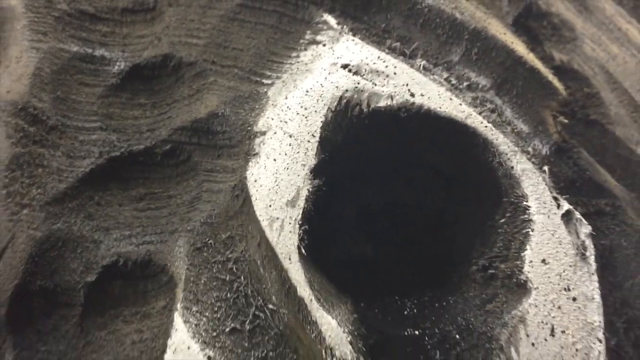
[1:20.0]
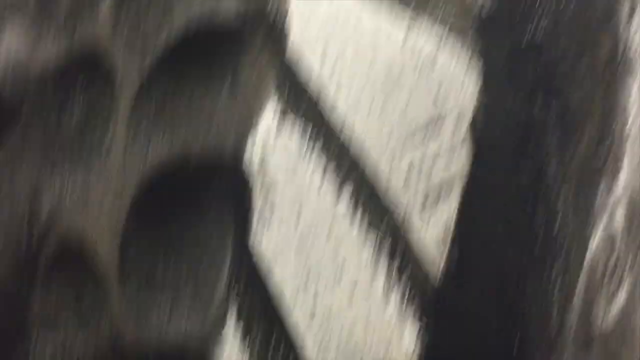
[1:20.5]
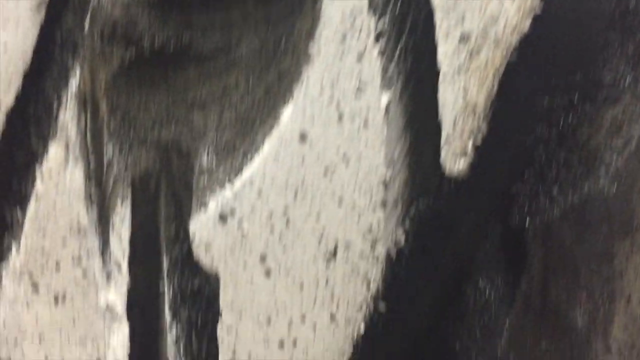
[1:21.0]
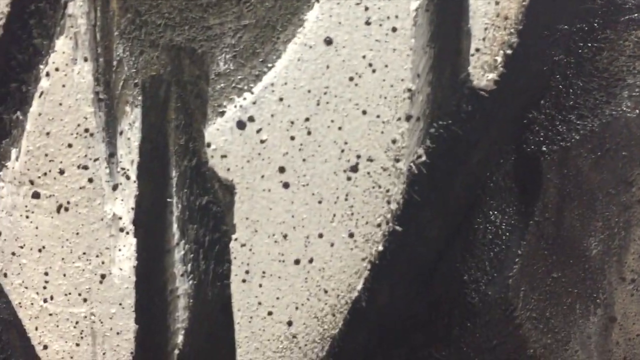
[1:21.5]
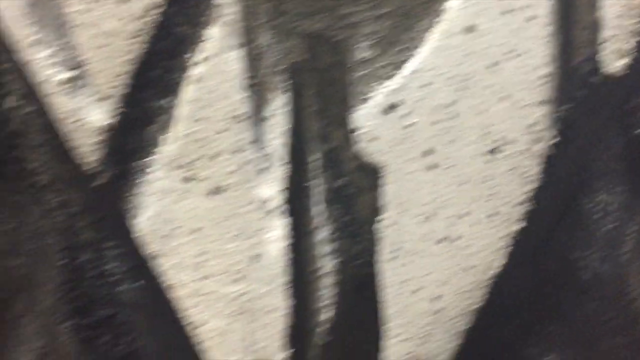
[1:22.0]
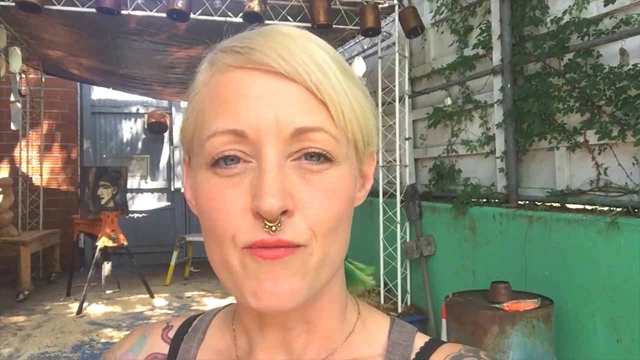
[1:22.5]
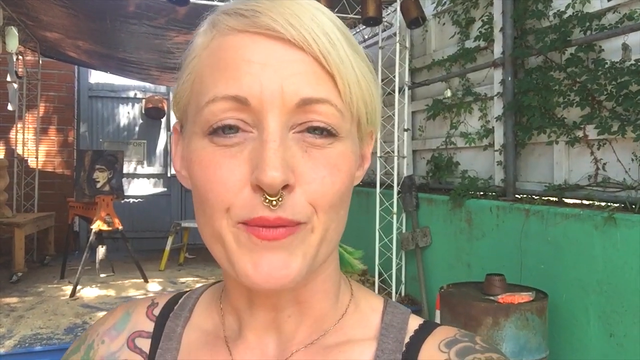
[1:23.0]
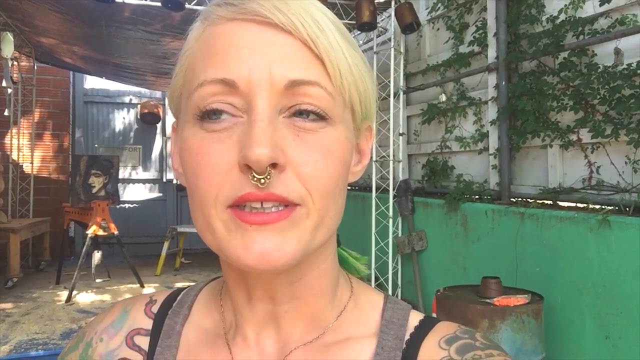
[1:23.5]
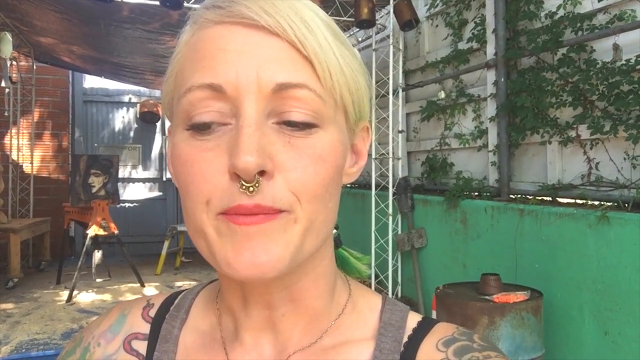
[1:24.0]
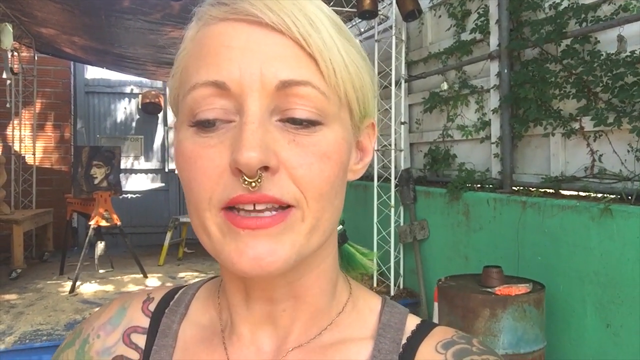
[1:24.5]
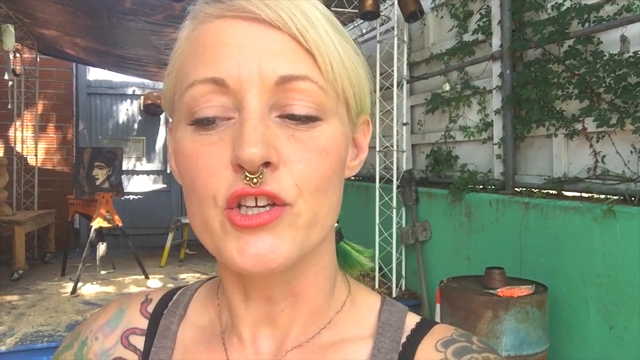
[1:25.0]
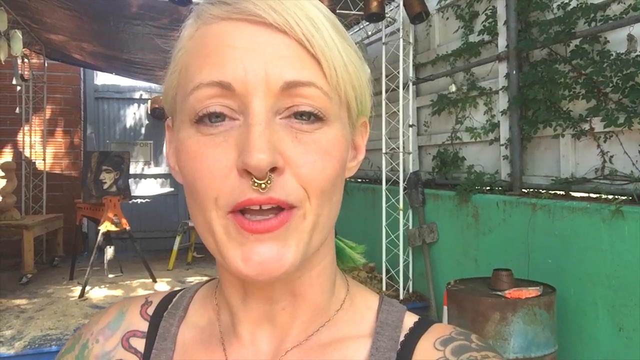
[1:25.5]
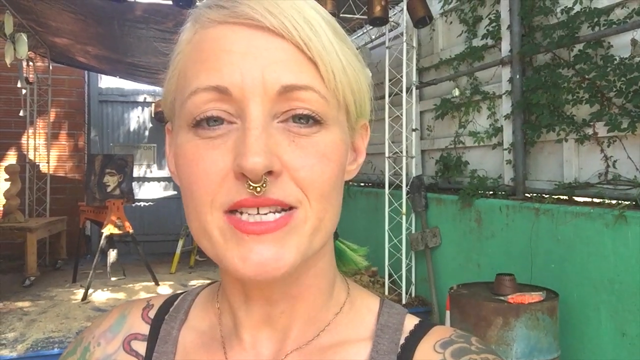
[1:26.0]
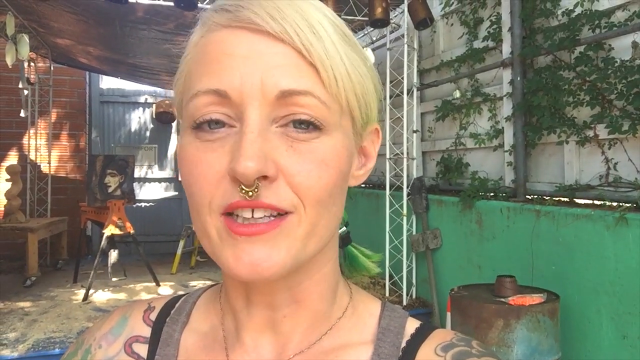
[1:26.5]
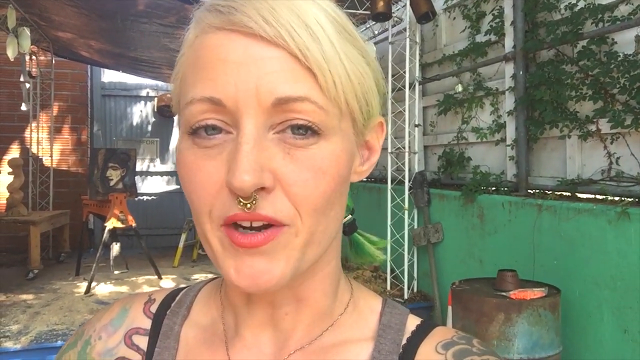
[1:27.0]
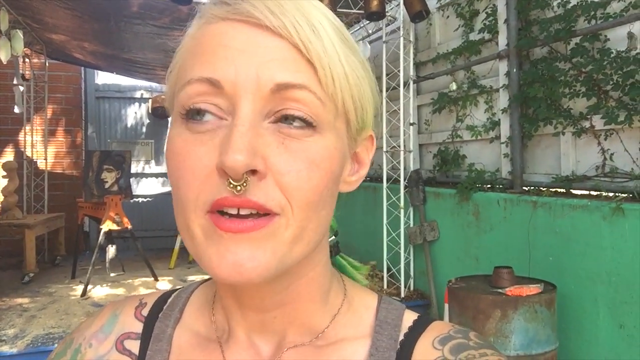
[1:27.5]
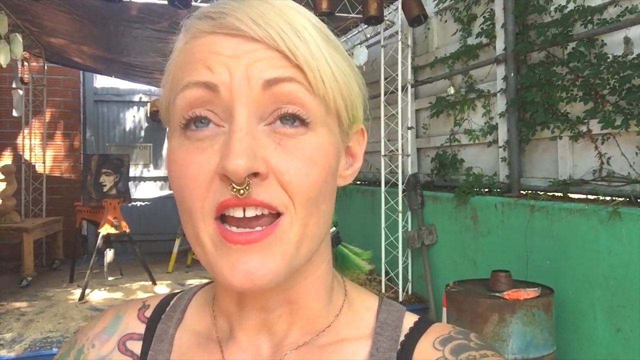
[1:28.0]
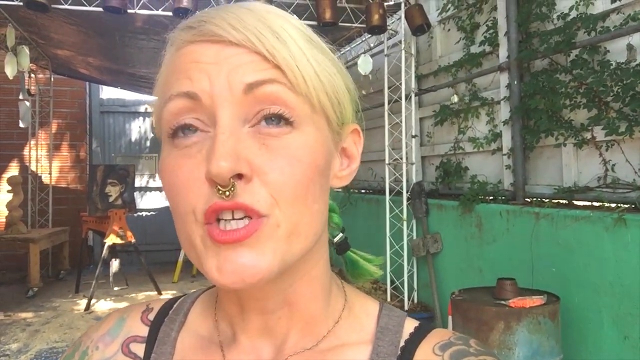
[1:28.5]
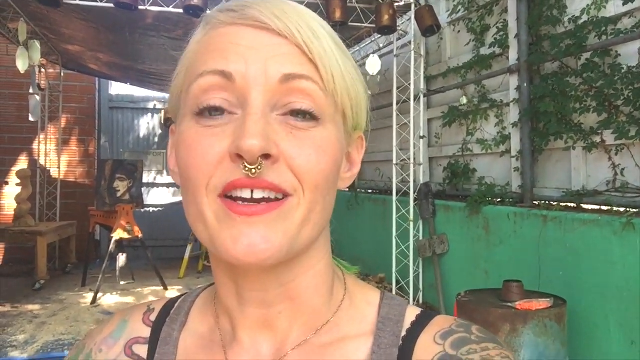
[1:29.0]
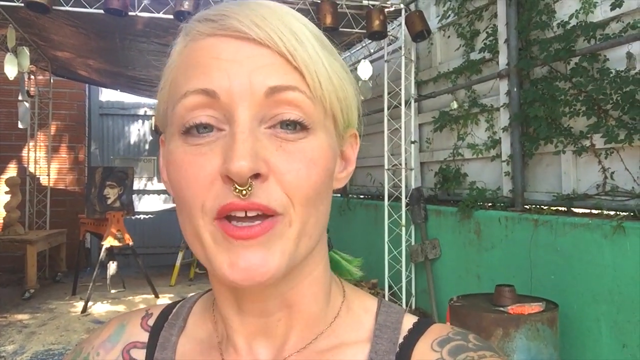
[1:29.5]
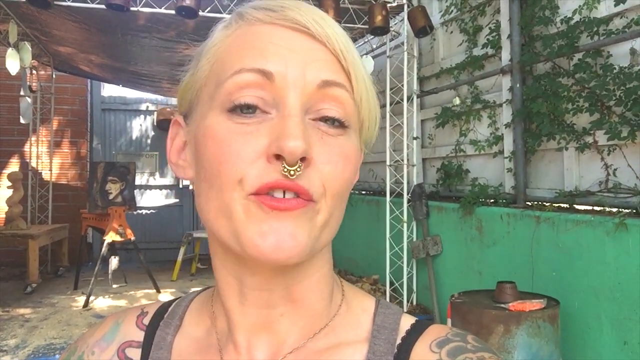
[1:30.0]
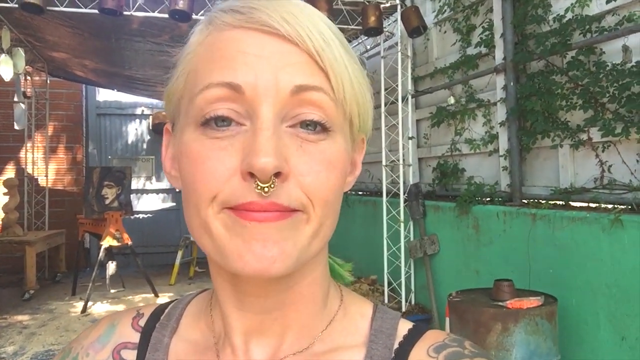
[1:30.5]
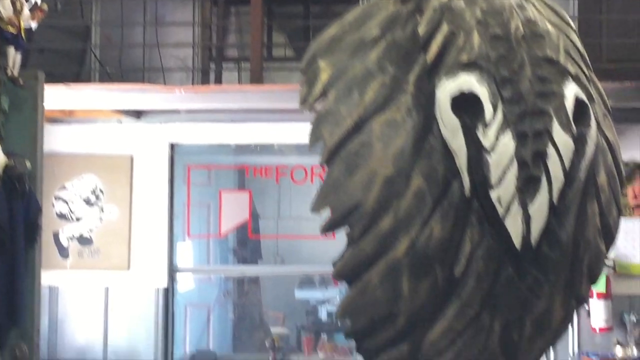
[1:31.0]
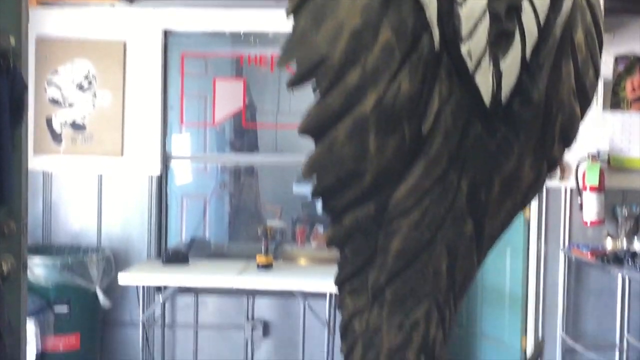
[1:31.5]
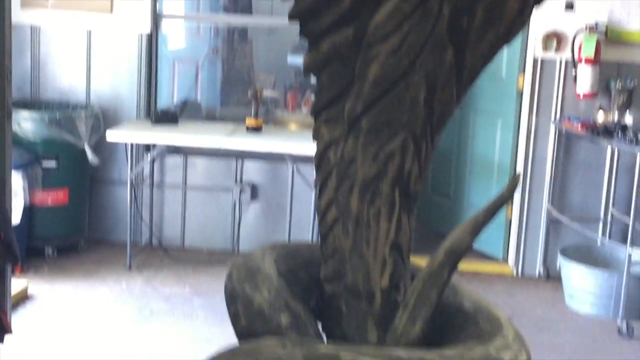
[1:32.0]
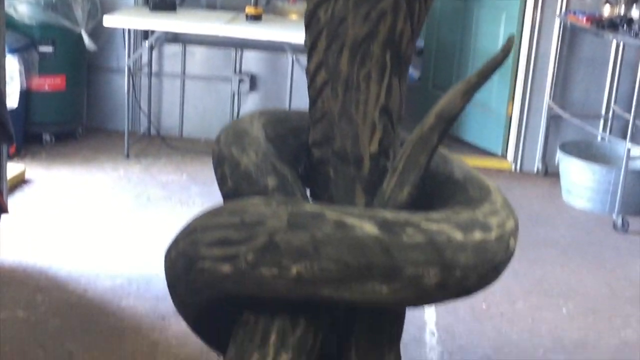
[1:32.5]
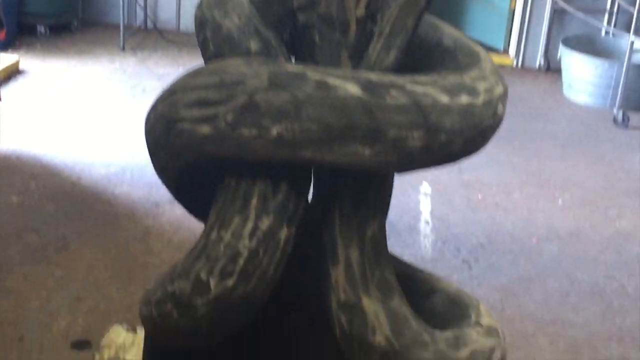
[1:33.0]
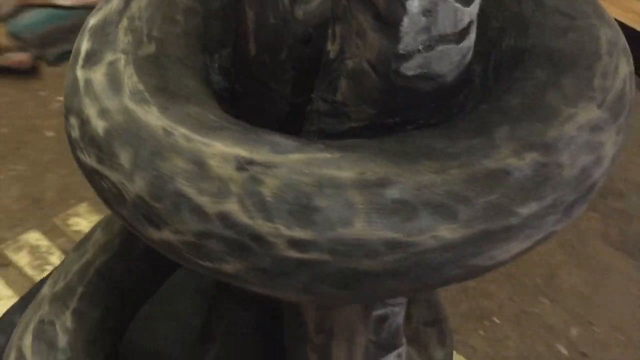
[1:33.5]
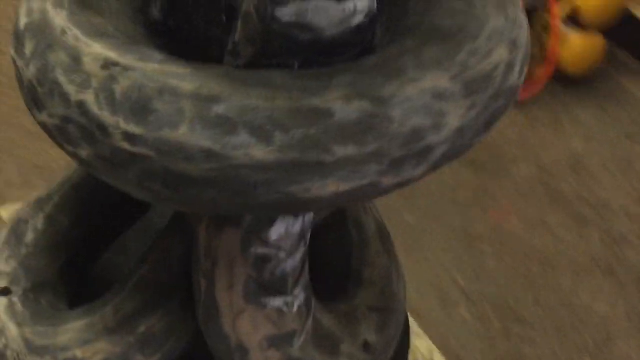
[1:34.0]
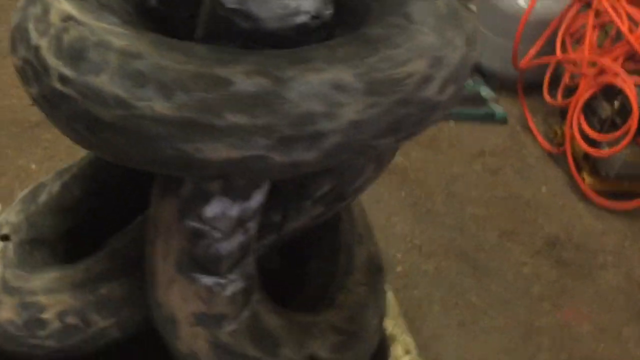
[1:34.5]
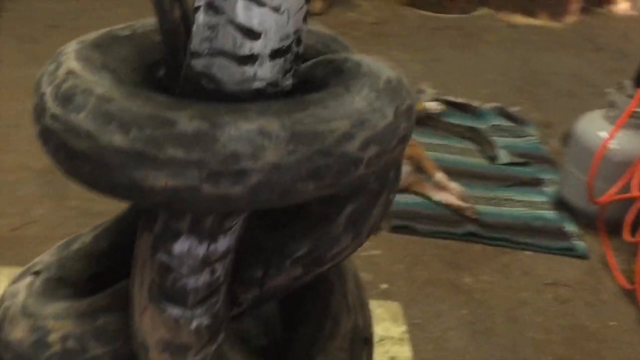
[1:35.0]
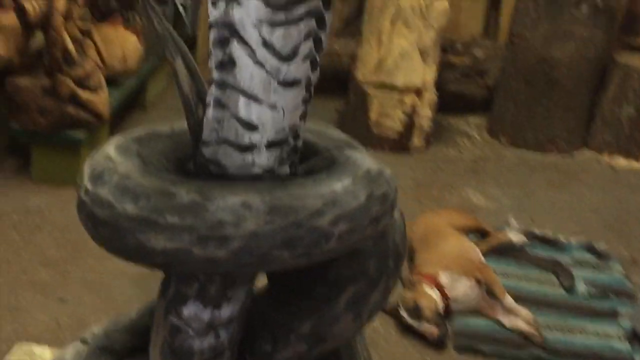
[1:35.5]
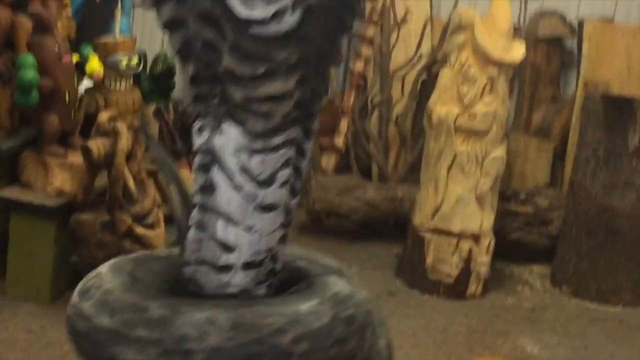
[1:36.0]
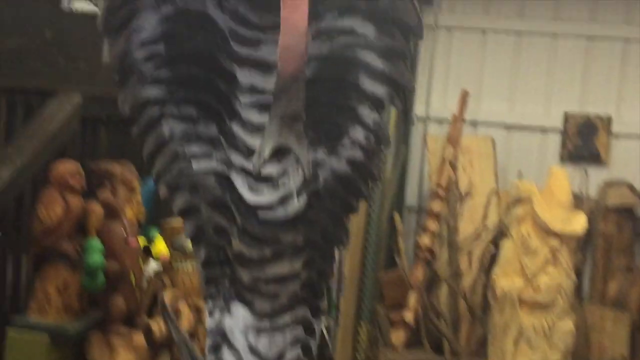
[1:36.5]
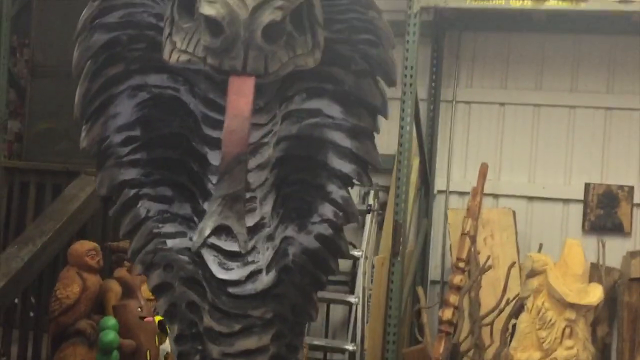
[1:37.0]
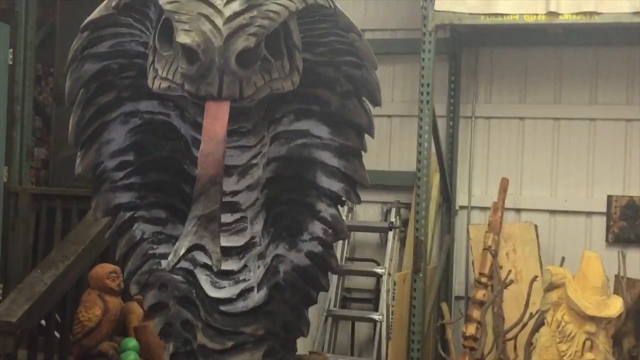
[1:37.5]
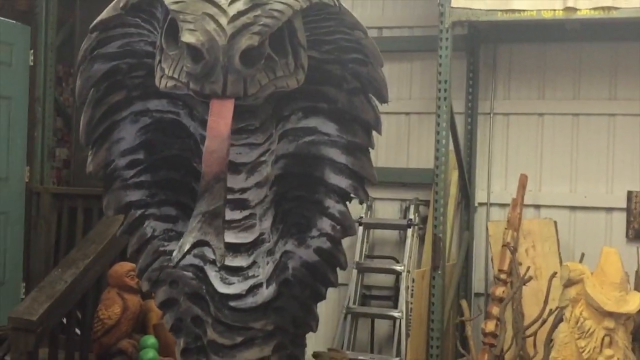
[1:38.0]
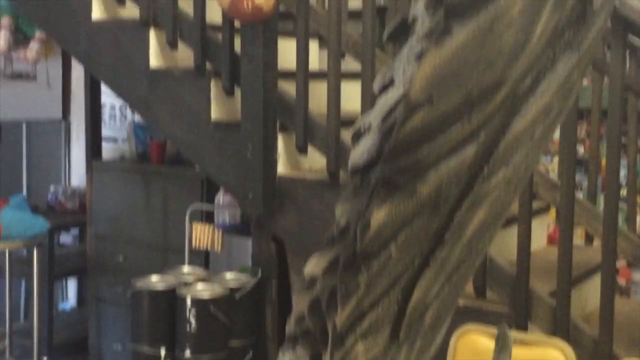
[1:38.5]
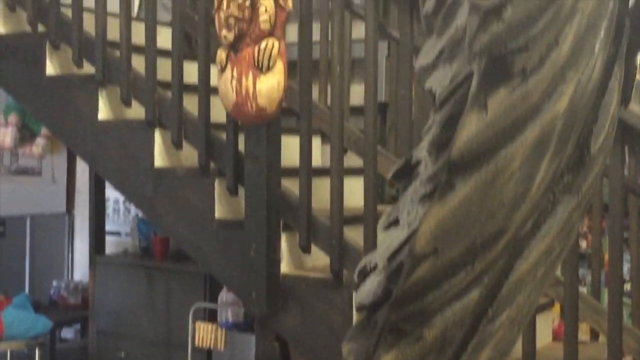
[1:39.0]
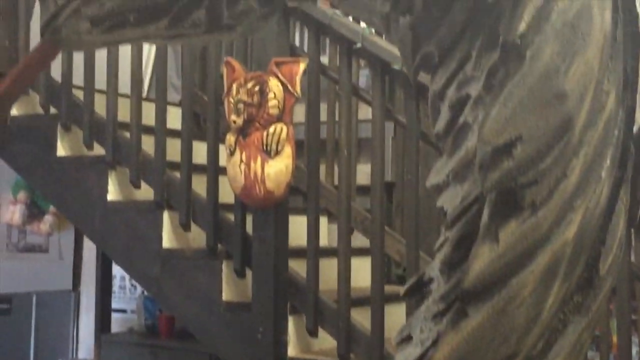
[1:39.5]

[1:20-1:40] Different parts of the sculpture are shown after being painted and spray-painted white. The video cuts back to the woman in the garden talking to the camera. She wears a grey strap top, with the black straps of her bra visible at the top, and there is a tattoo of what appears to be a snake just under one of the black straps of her top. She smiles as she talks and appears very happy. The video cuts to the snake sculpture, starting at the top and moving down, and the camera then pans around it to show the finished piece. The snake has black and white markings on its skin and a red and black tongue protruding from its mouth, and it is intricately designed. The side of the snake is then shown.